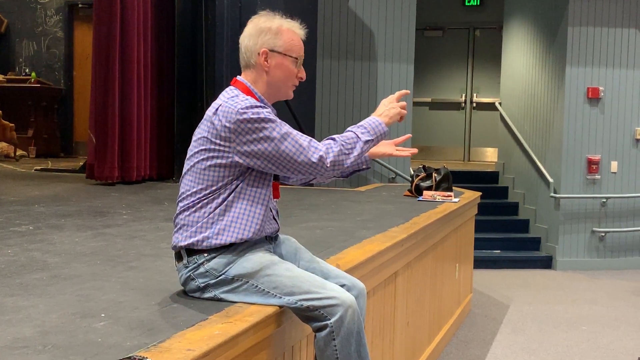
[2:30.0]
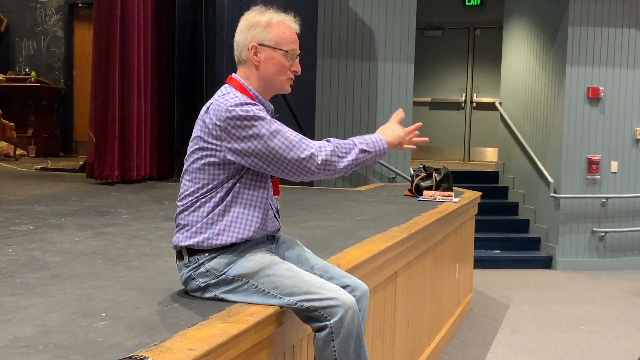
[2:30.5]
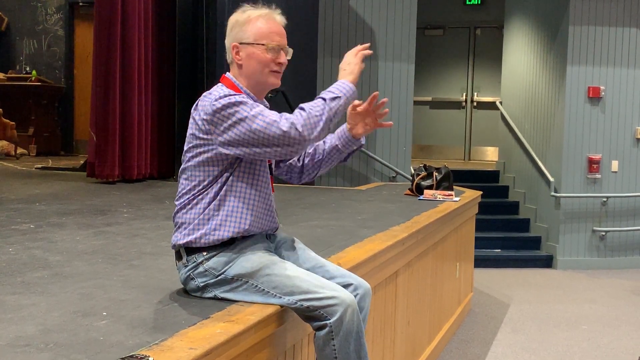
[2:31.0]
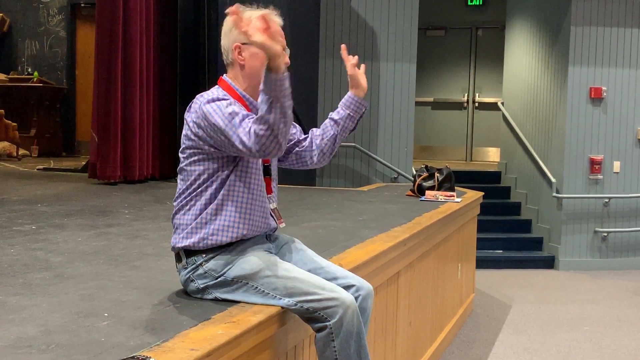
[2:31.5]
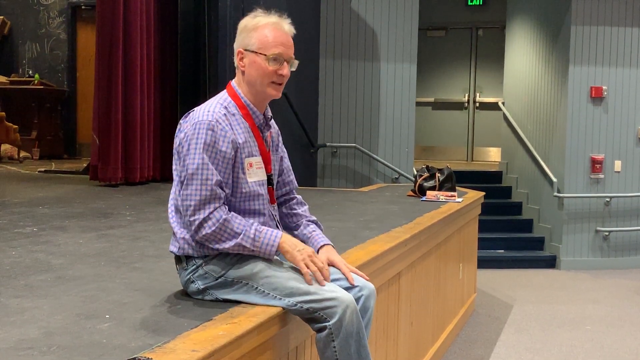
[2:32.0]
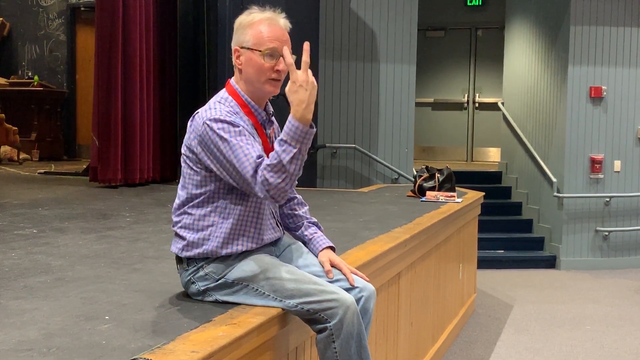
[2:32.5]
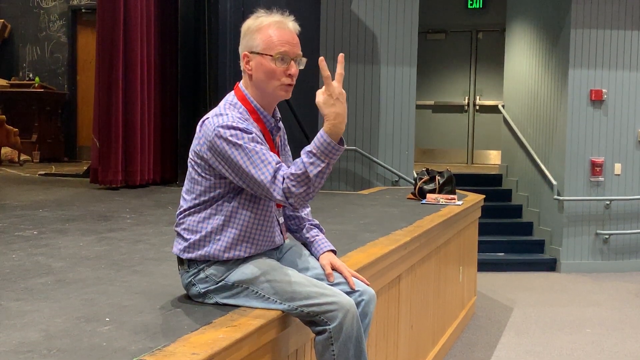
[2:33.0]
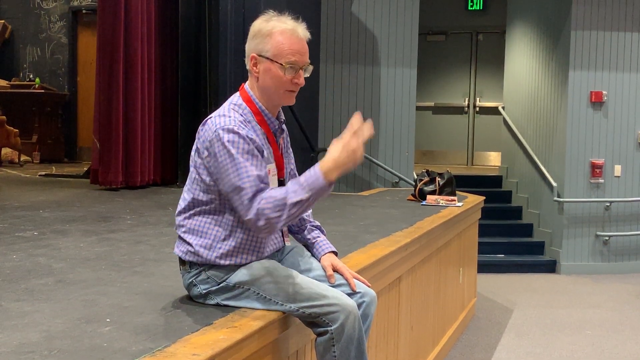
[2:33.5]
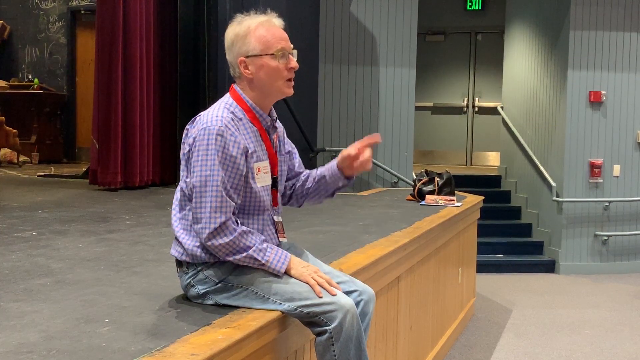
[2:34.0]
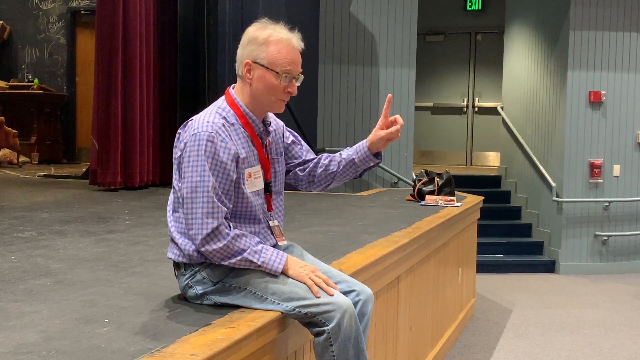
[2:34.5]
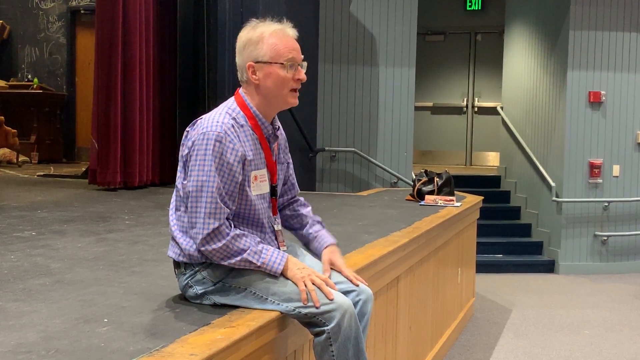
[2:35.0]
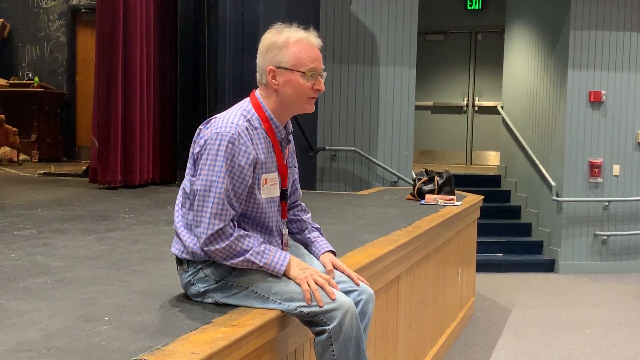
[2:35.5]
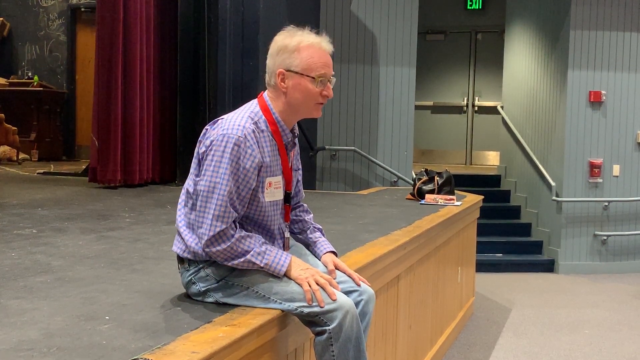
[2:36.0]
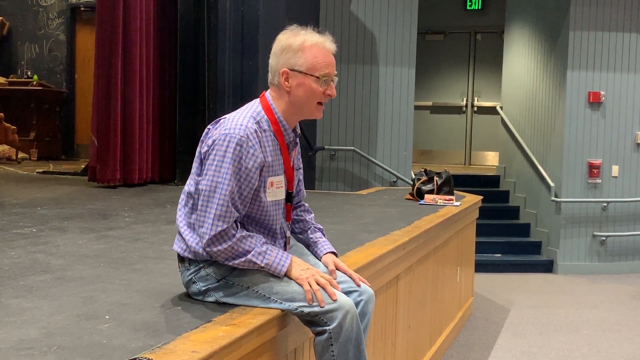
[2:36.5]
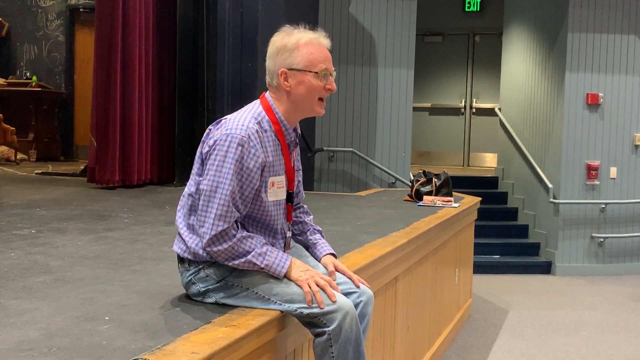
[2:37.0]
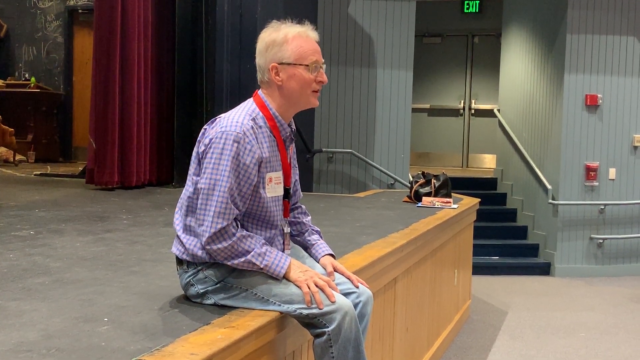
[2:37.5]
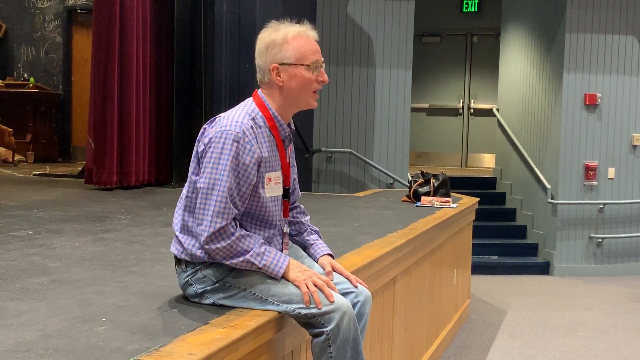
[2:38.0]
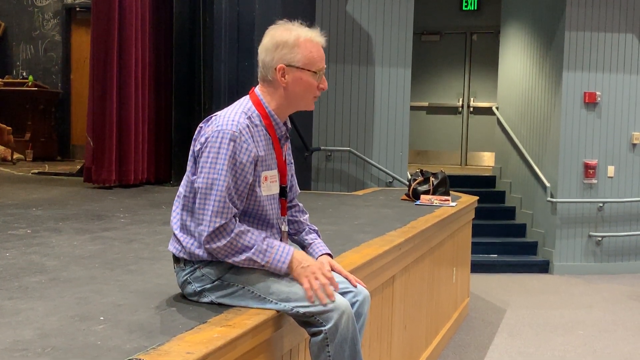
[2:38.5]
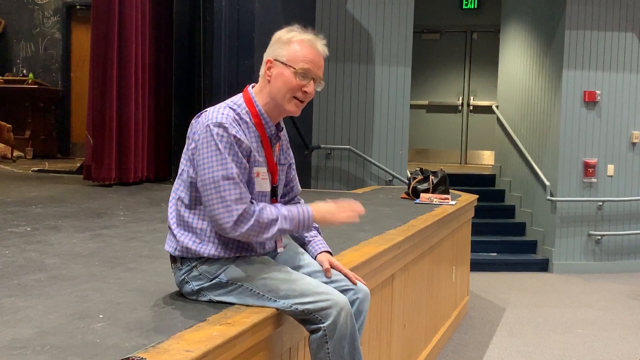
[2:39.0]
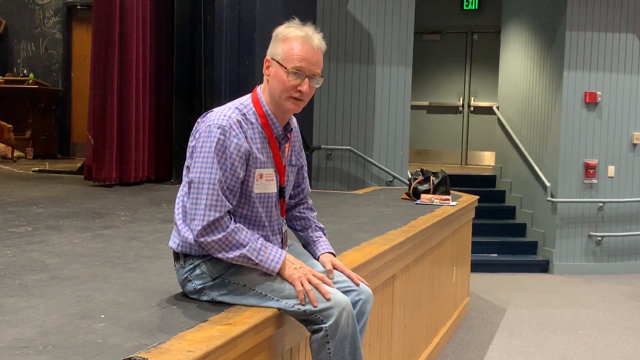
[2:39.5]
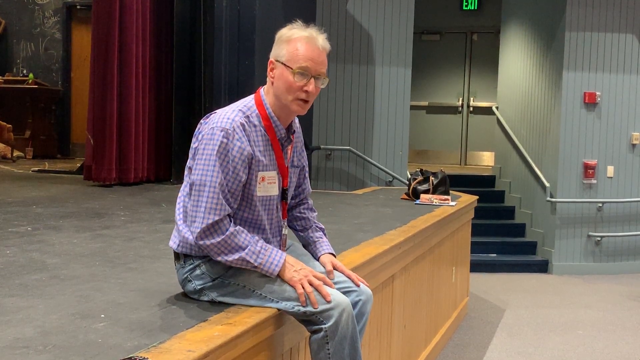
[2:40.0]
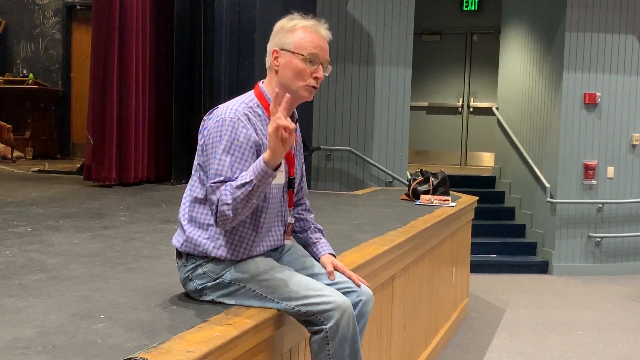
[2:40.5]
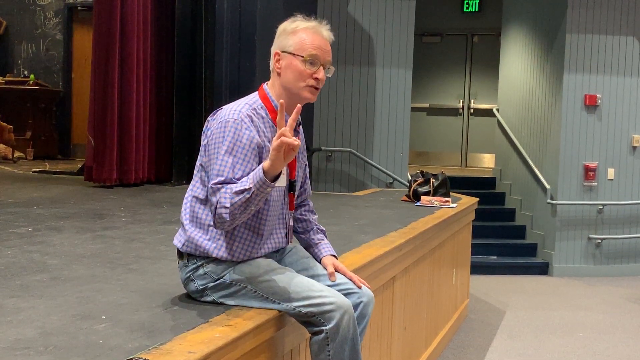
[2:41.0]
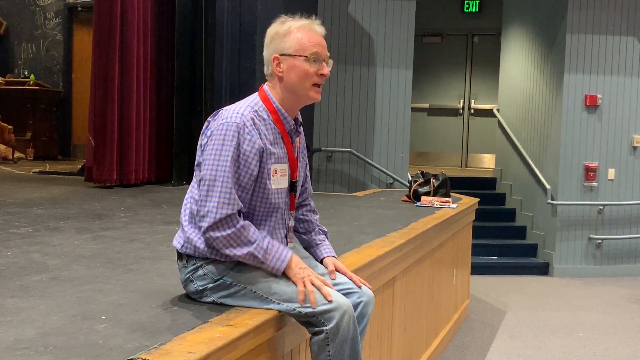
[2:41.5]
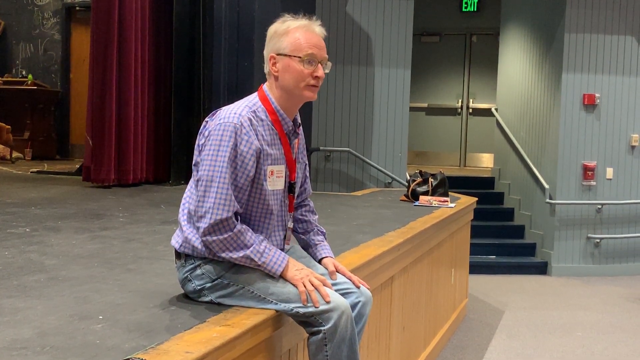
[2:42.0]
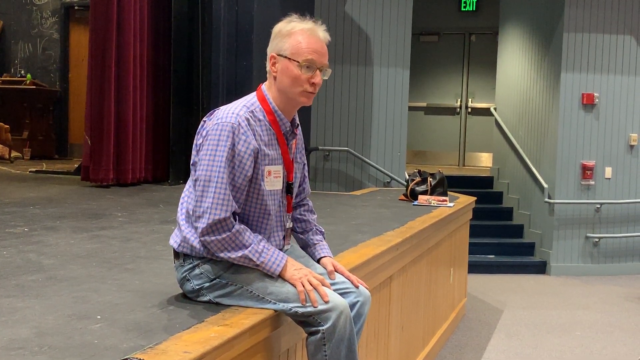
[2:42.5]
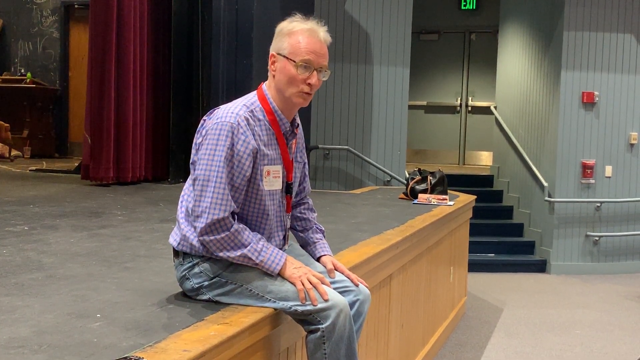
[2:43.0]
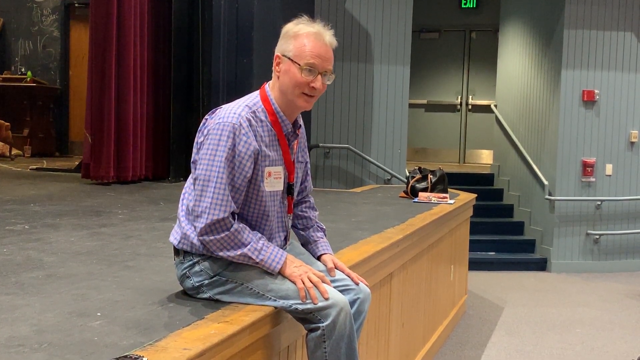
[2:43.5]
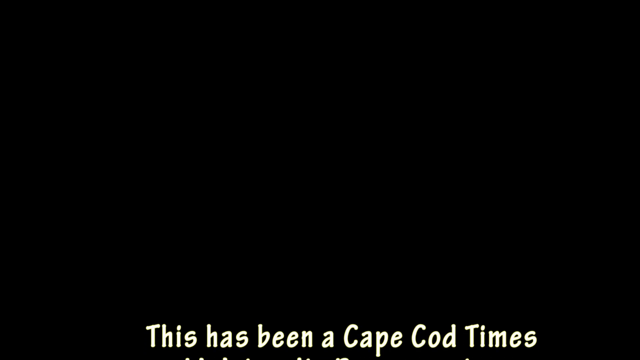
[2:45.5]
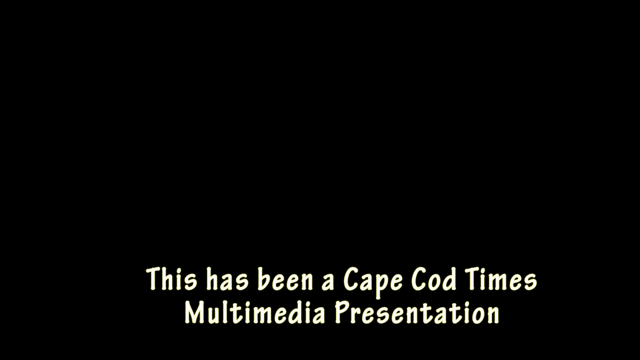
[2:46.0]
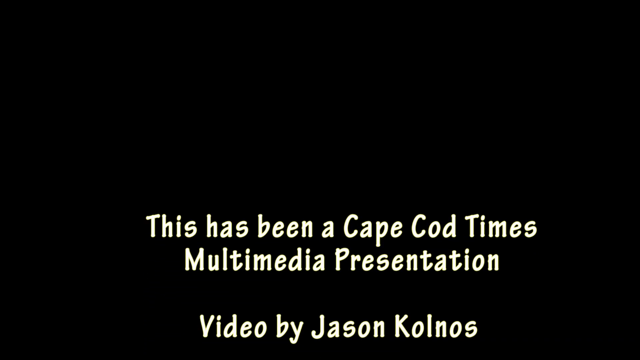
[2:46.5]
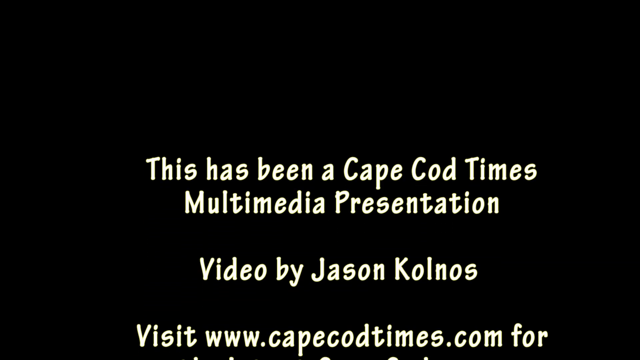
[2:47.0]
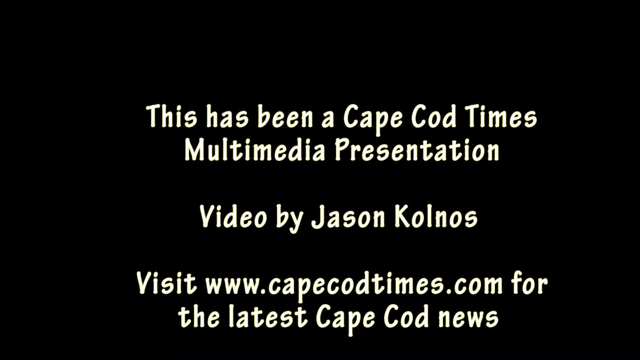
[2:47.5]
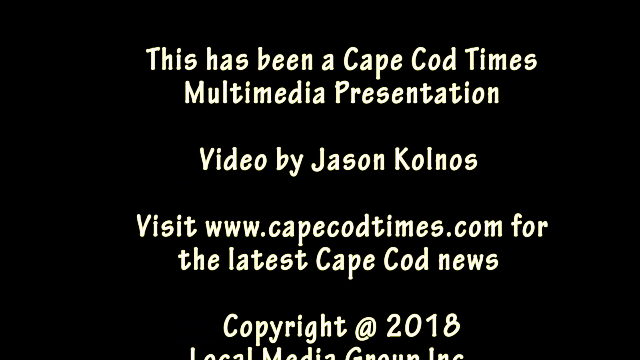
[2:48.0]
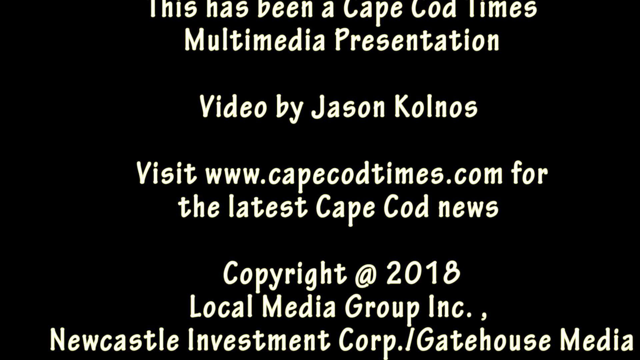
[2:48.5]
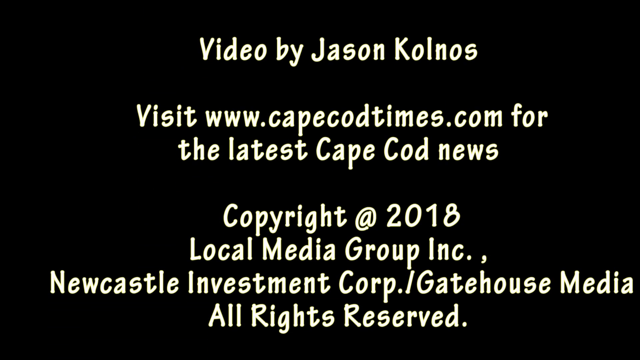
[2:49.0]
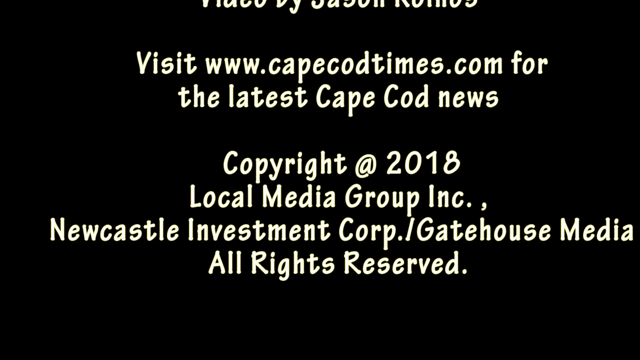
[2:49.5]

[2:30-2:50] The man sits on the edge of the stage, while the high school students sit in the first couple rows of the auditorium. Text then says "this has been a Cape Cod Times multimedia presentation video by Jason Colmos. Visit www.capecodtimes.com for the latest Cape Cod news". At the end, words scroll up from the bottom, reading "copyright 2018 local media group, Inc. Newcastle Investment Corp. / gatehouse media, all rights reserved."